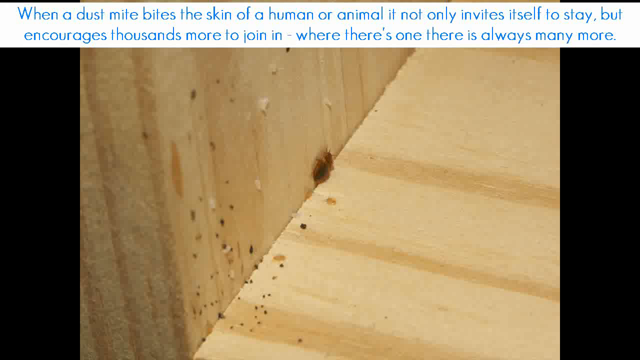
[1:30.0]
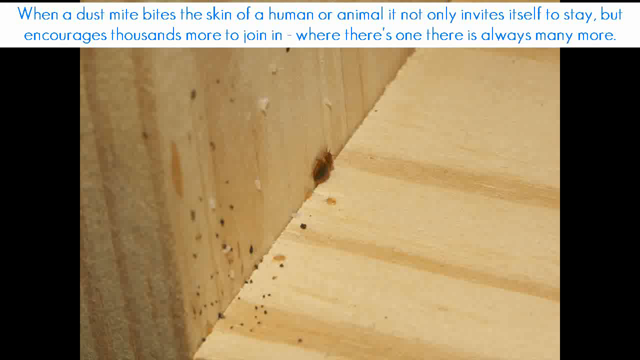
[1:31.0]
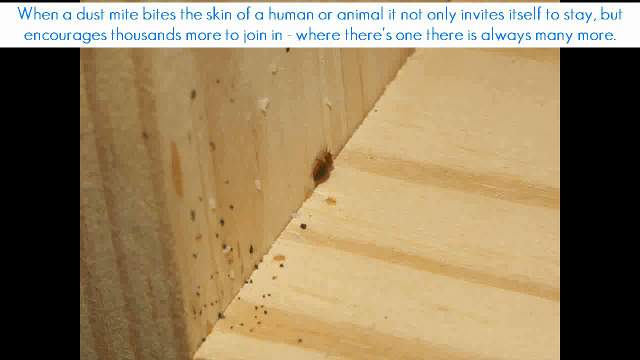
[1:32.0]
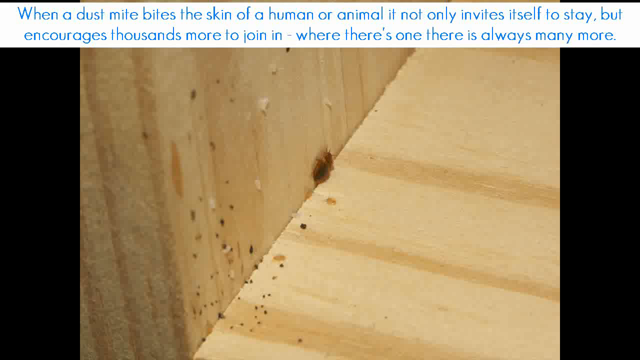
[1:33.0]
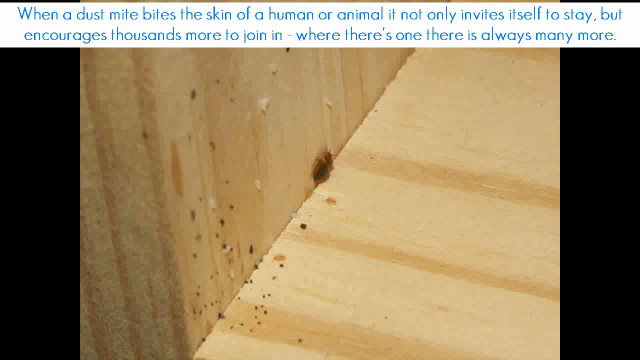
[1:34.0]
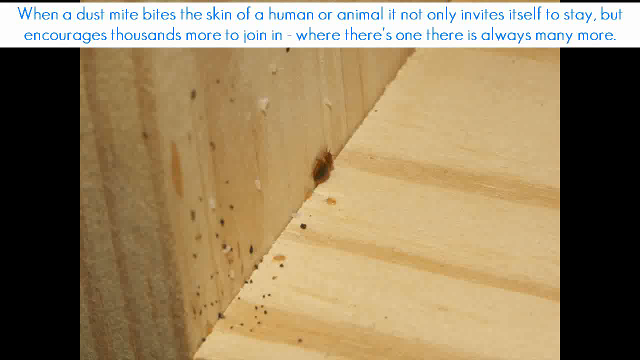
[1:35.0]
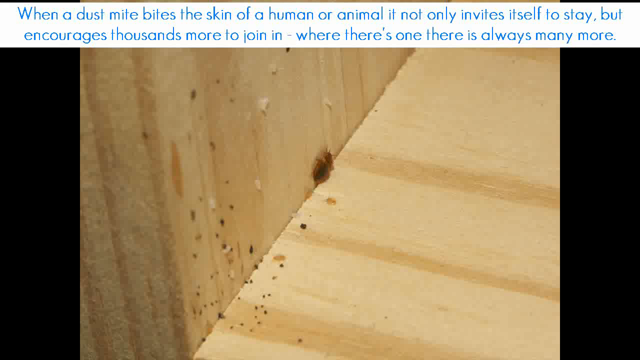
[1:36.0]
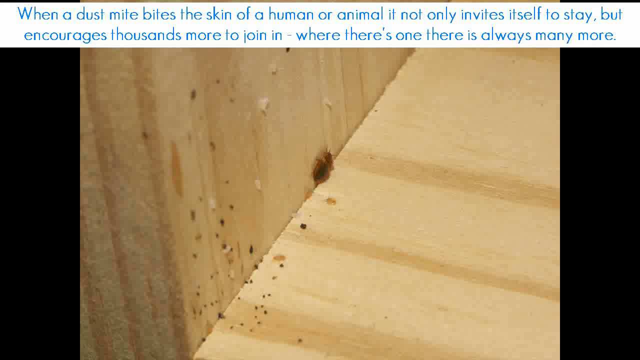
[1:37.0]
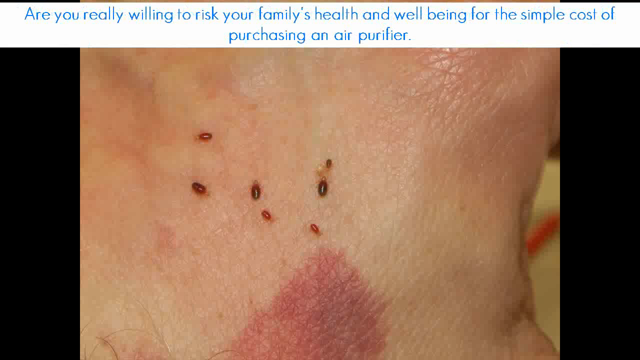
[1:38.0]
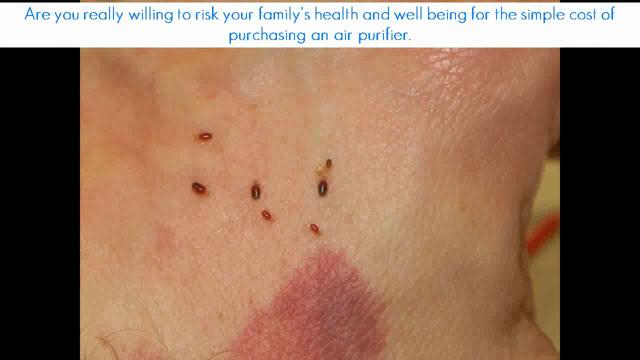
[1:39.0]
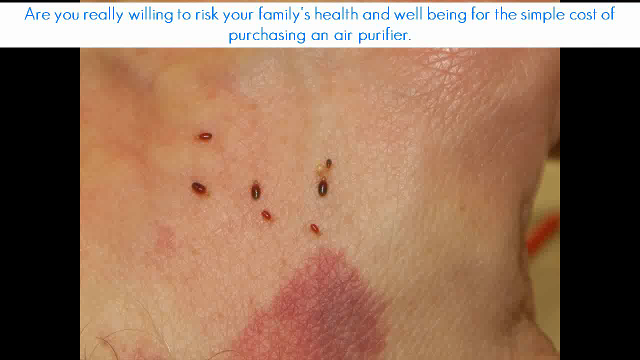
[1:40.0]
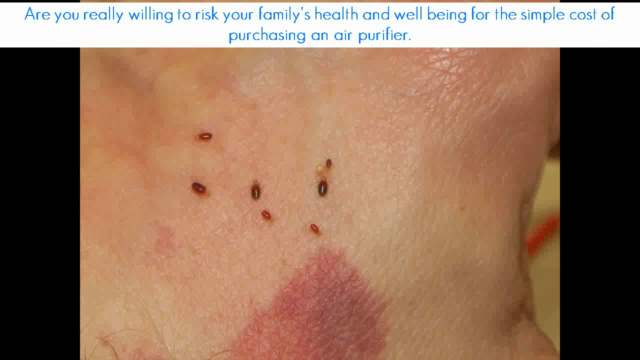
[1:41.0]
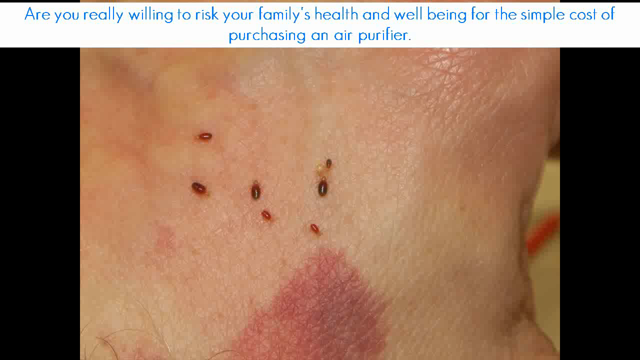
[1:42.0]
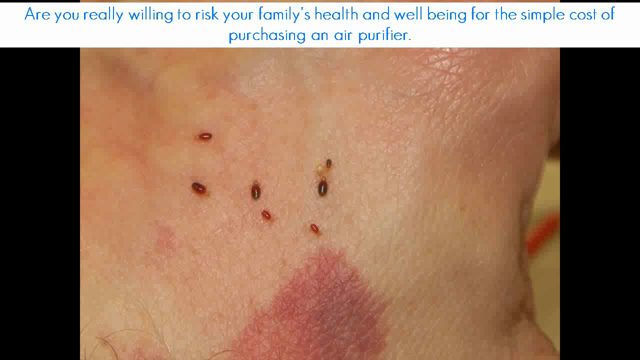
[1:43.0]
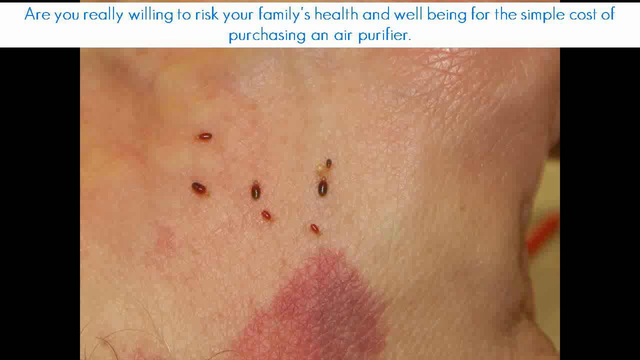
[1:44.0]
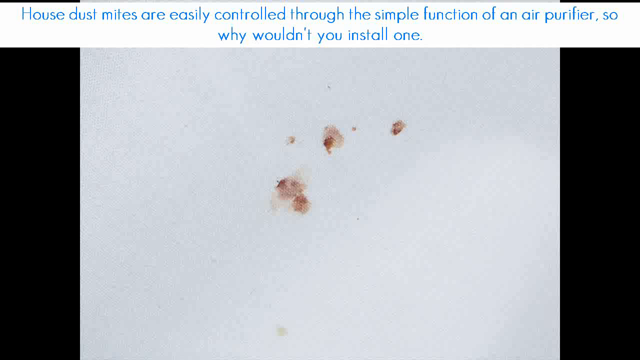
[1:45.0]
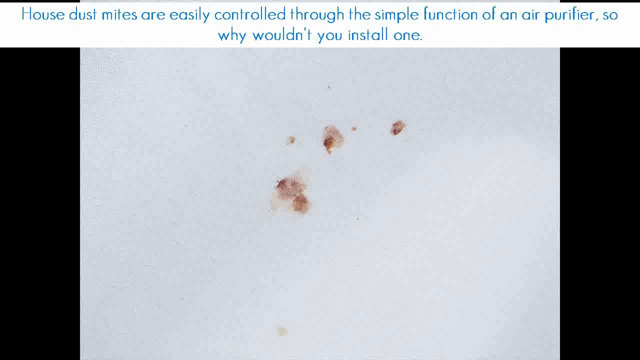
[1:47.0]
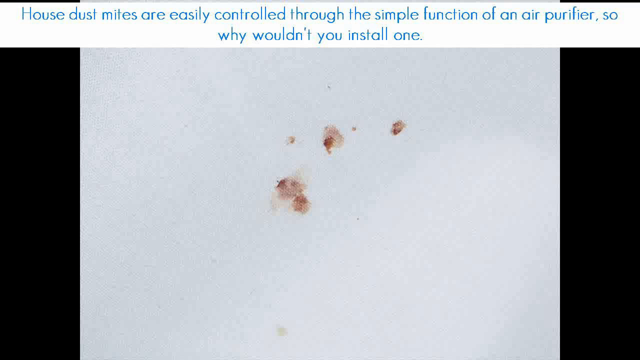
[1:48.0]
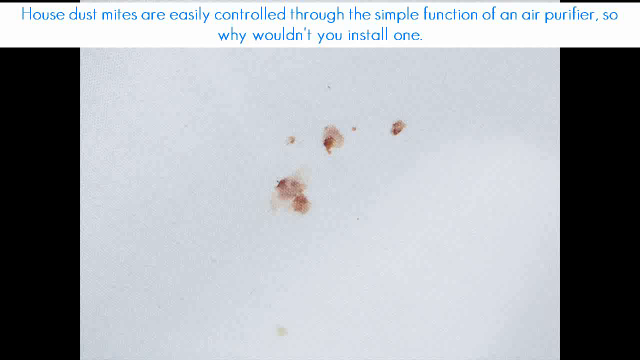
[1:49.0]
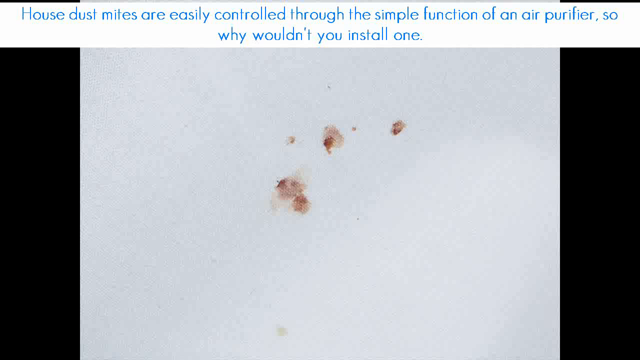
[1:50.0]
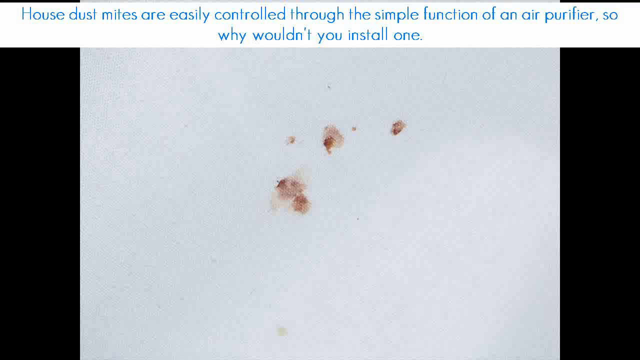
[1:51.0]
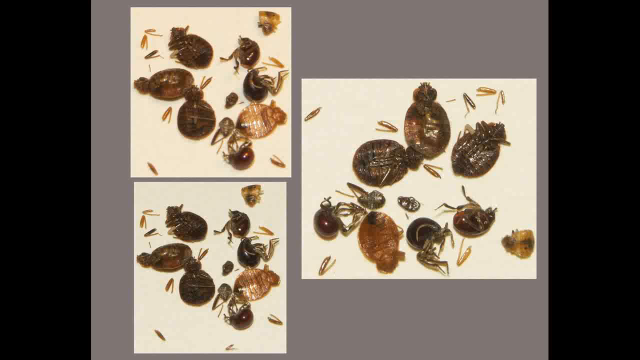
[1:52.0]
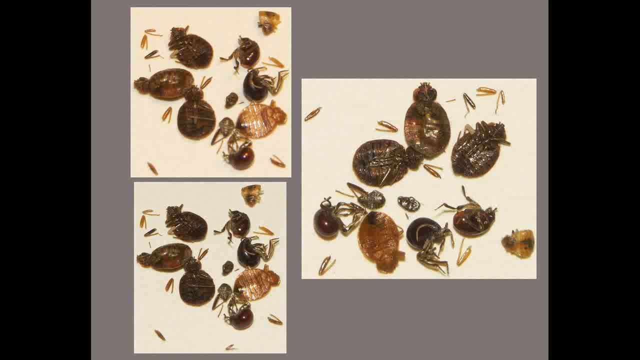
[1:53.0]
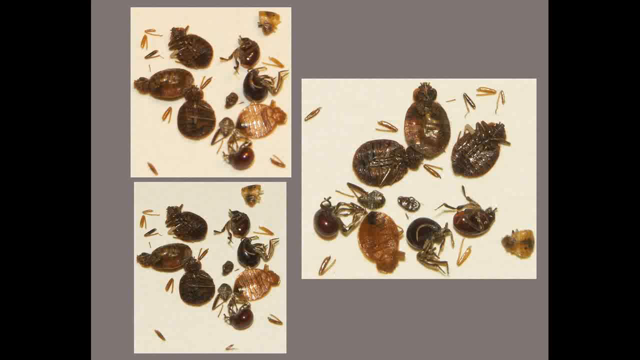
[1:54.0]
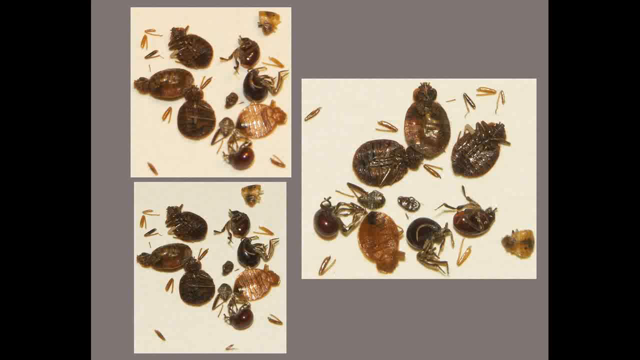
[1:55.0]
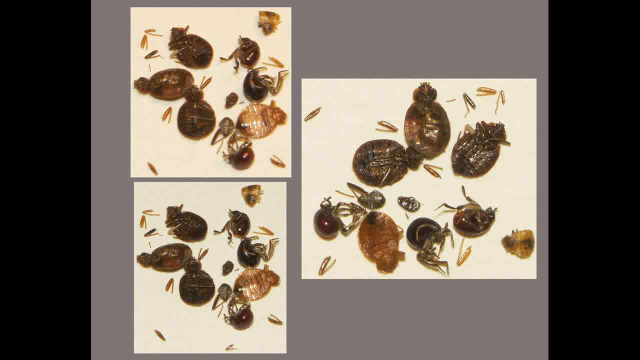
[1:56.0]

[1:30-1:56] Text says the dust mite problem can easily be taken care of by installing an air purifier, "so why don't you?" Pictures of bugs on people's skin with rashes are shown; the bugs and rashes appear to be bed bugs rather than dust mites. Images of a dust mite broken down into its parts are also shown.